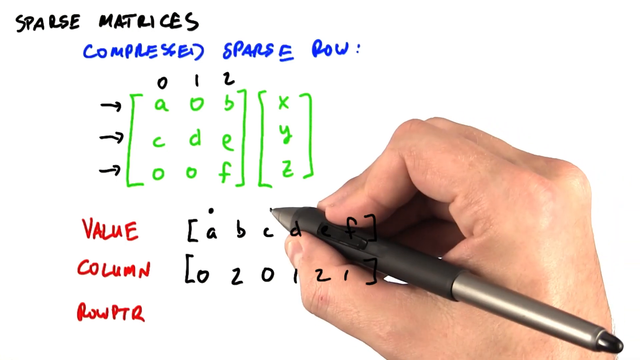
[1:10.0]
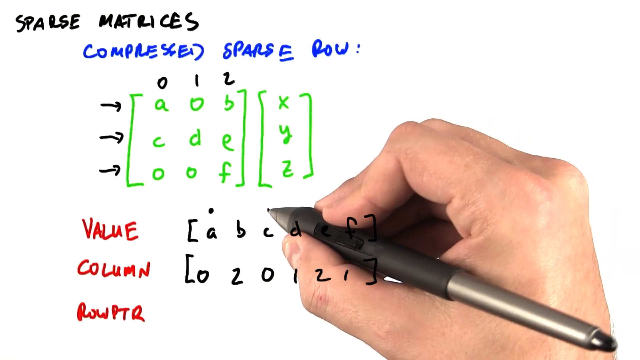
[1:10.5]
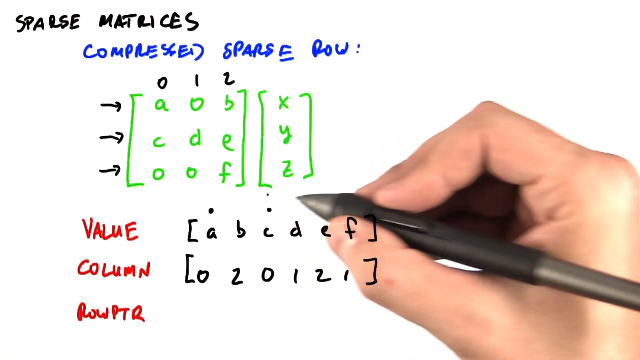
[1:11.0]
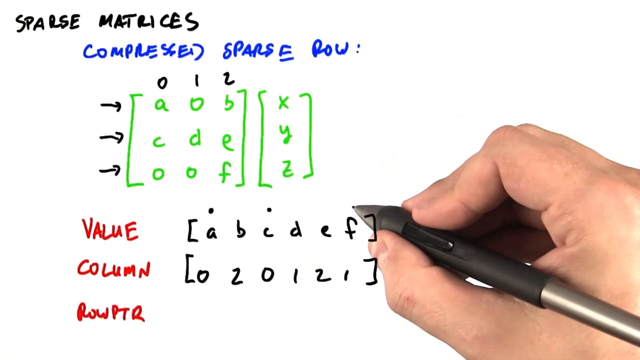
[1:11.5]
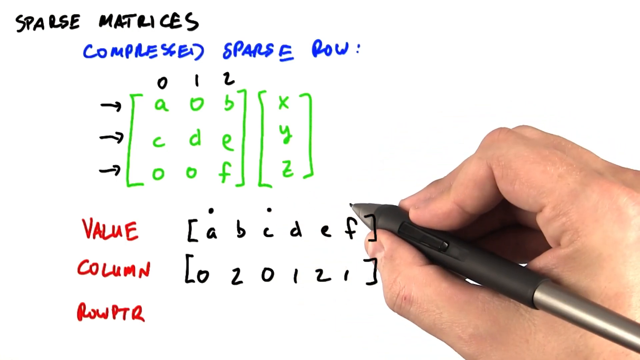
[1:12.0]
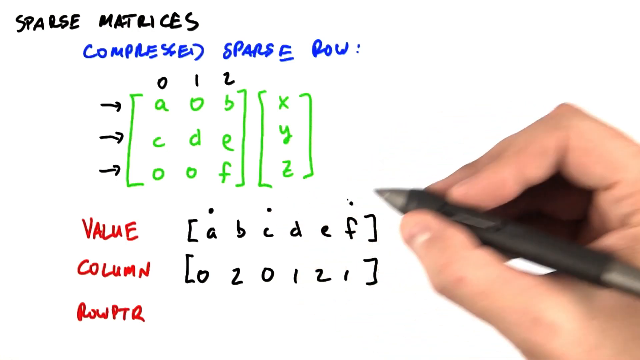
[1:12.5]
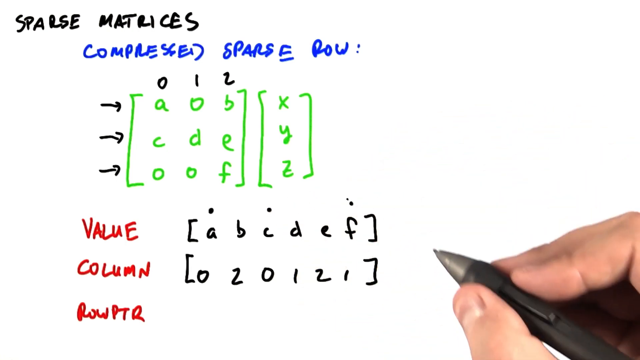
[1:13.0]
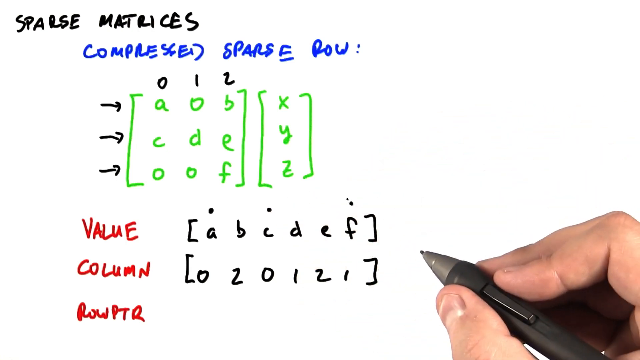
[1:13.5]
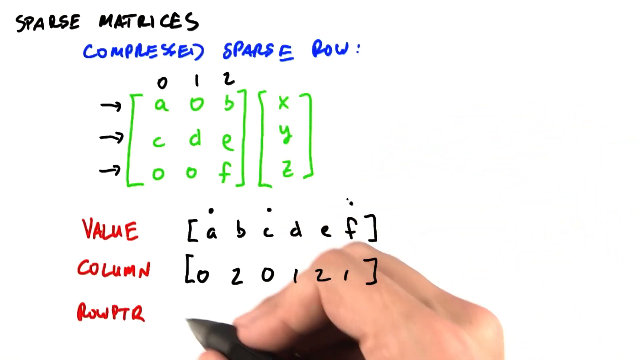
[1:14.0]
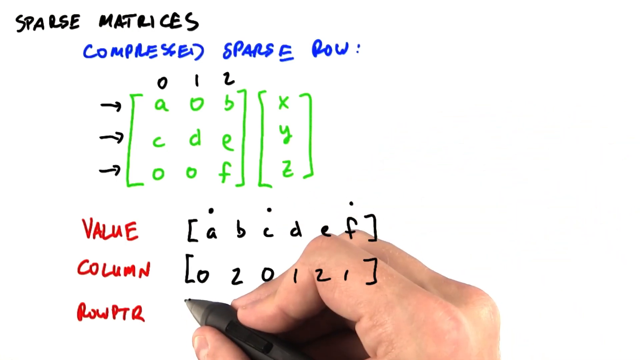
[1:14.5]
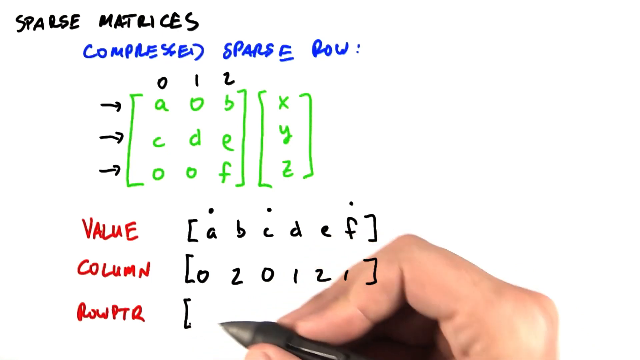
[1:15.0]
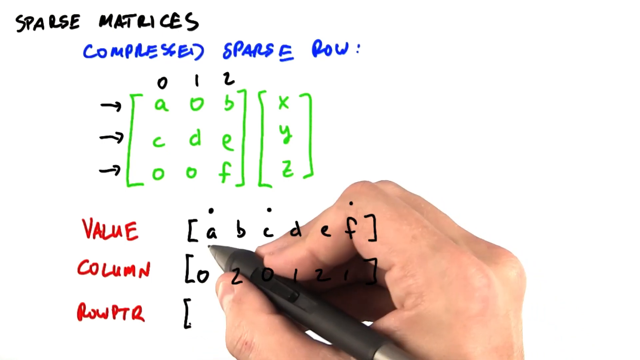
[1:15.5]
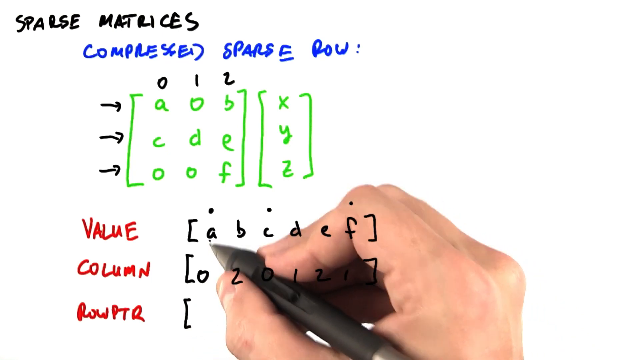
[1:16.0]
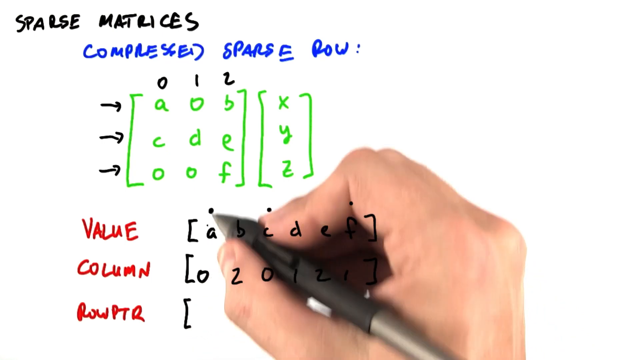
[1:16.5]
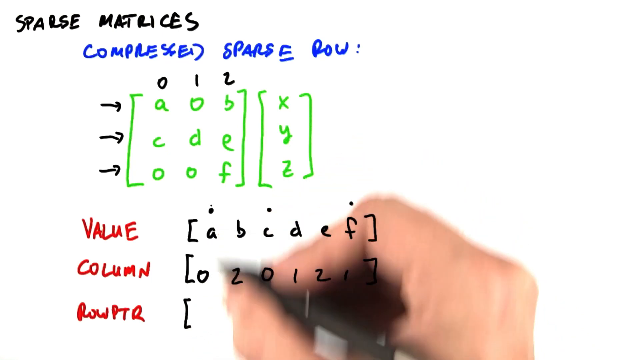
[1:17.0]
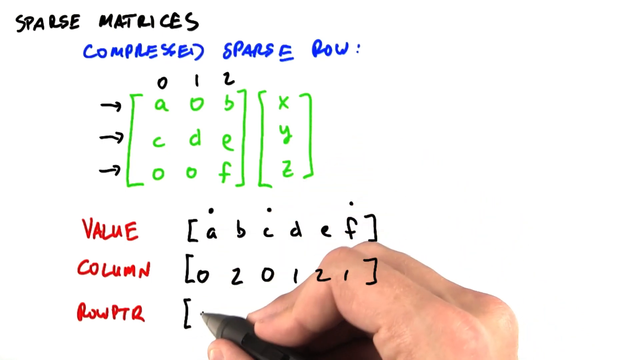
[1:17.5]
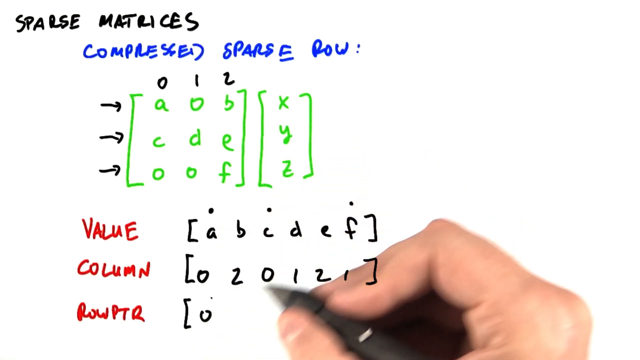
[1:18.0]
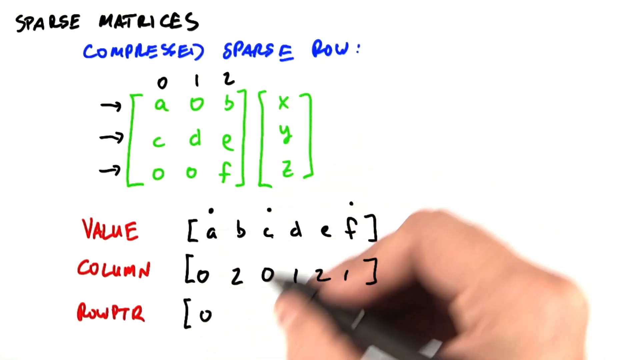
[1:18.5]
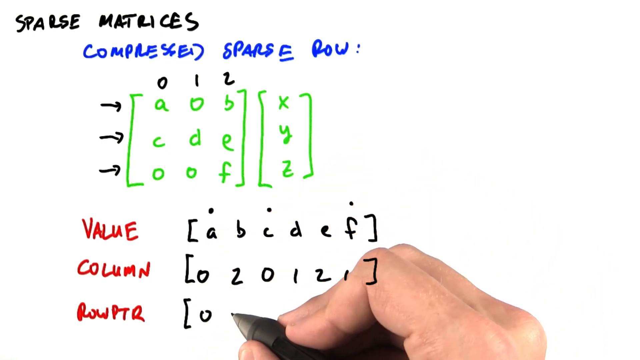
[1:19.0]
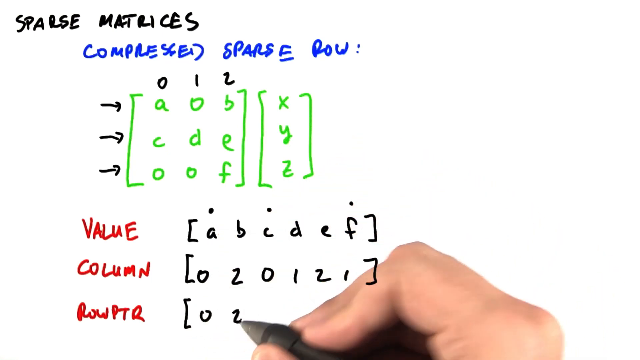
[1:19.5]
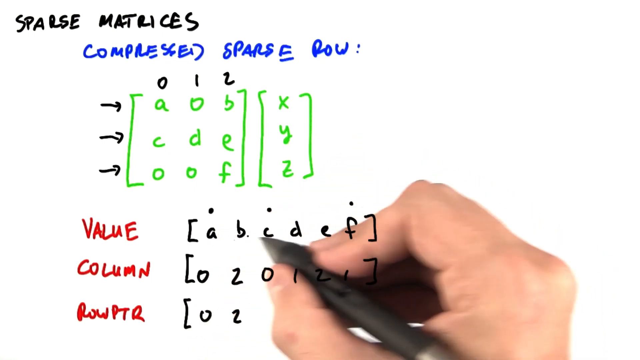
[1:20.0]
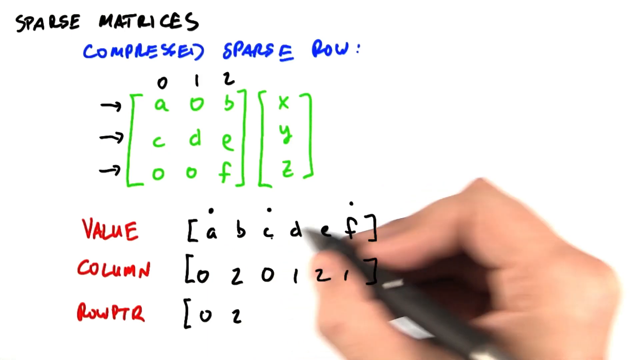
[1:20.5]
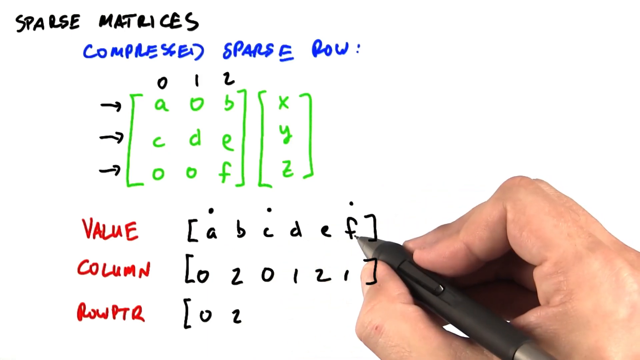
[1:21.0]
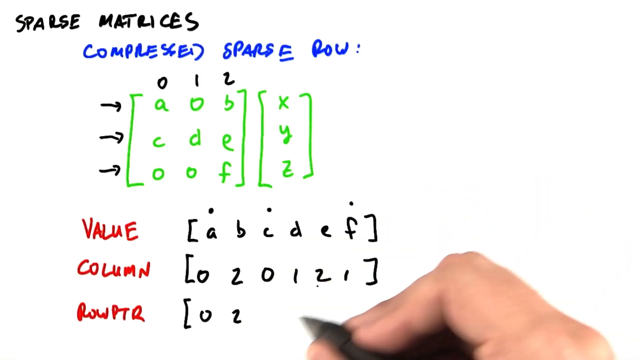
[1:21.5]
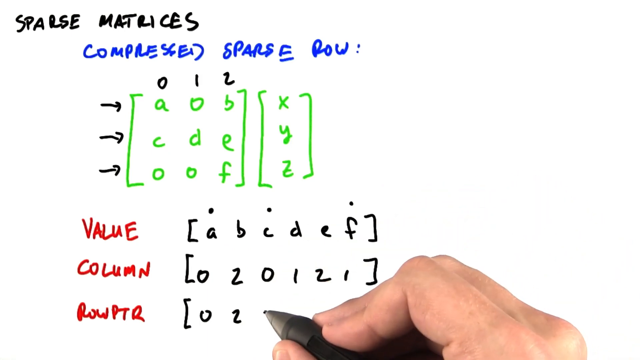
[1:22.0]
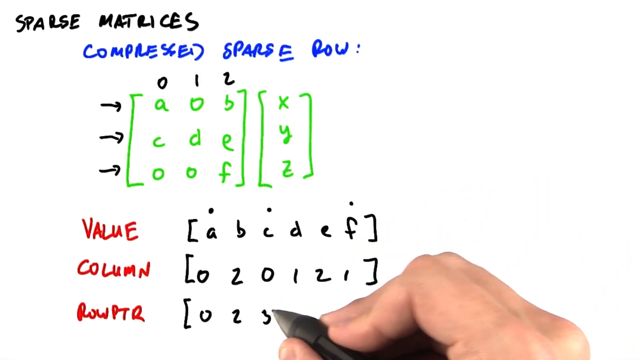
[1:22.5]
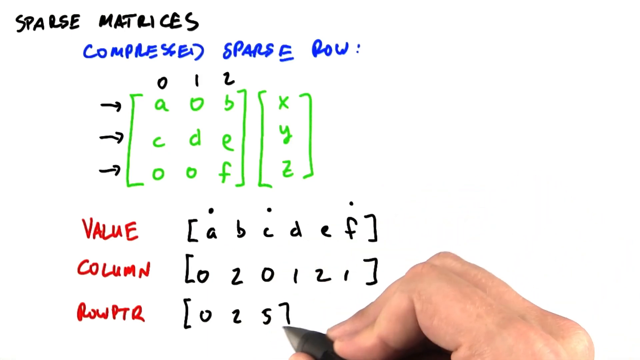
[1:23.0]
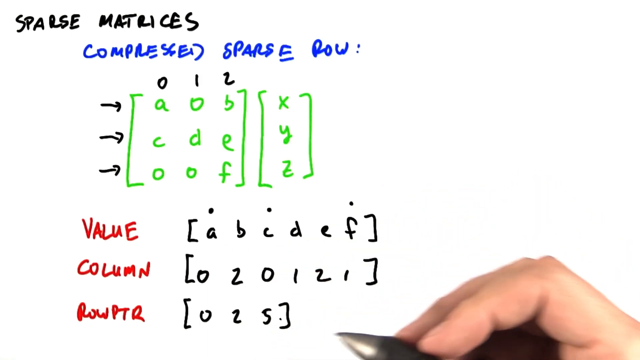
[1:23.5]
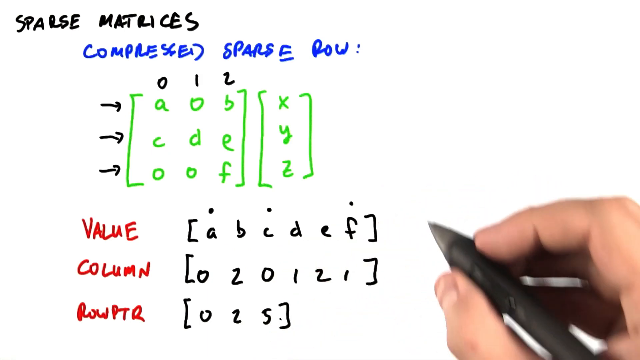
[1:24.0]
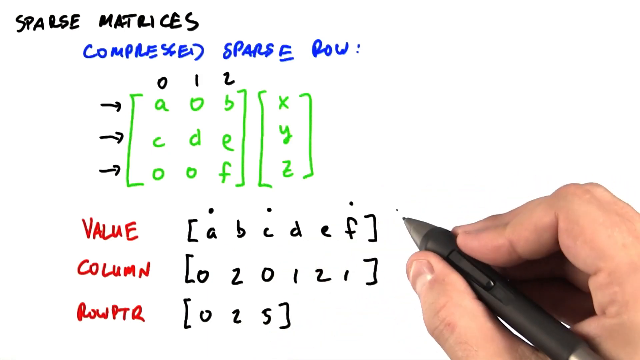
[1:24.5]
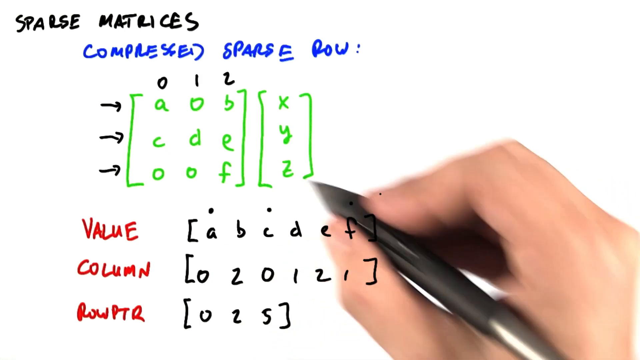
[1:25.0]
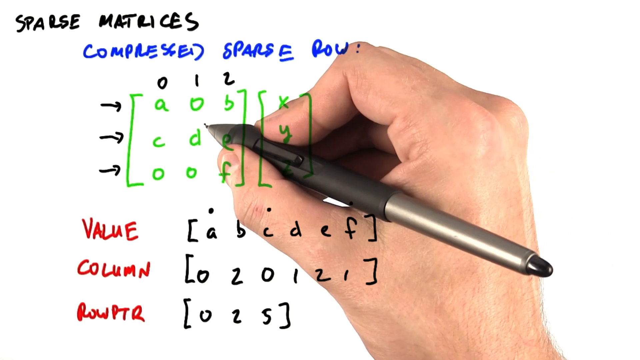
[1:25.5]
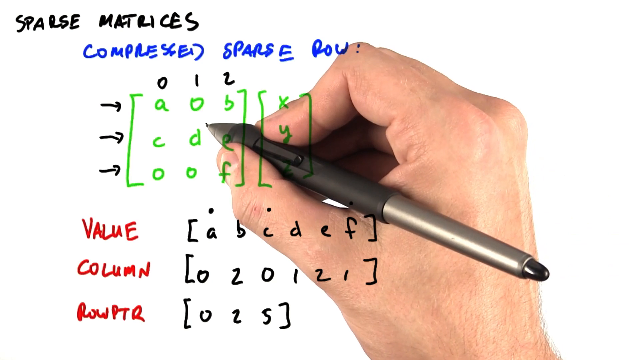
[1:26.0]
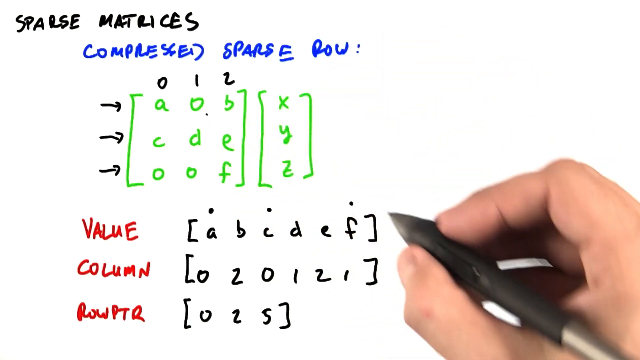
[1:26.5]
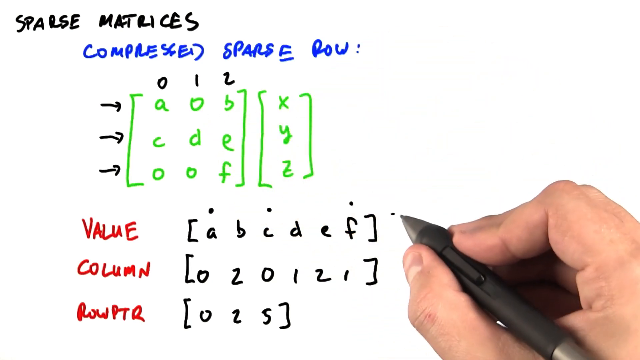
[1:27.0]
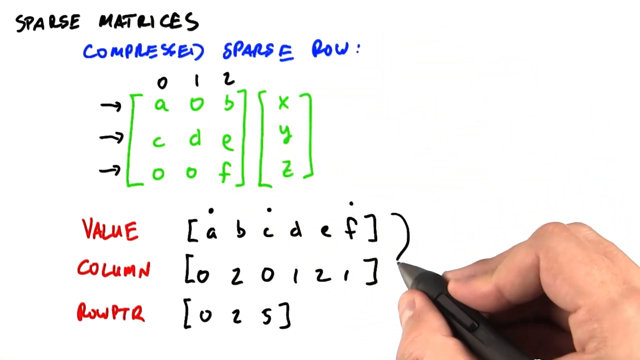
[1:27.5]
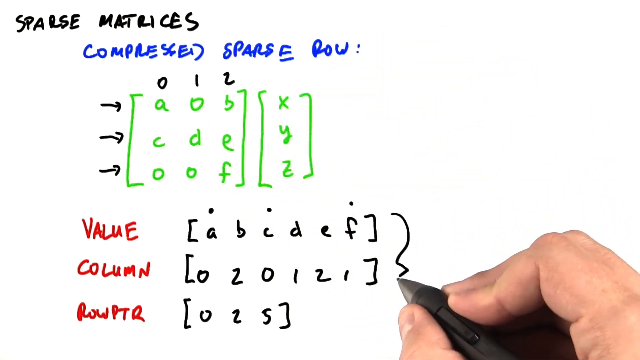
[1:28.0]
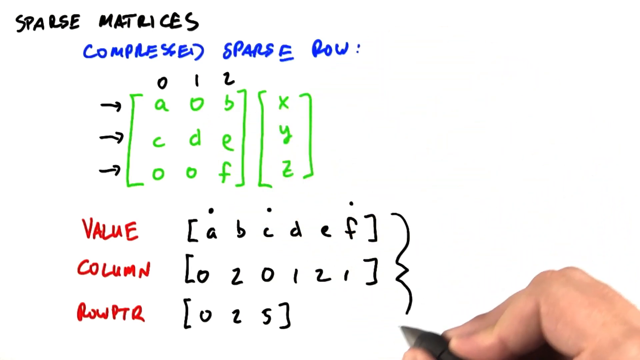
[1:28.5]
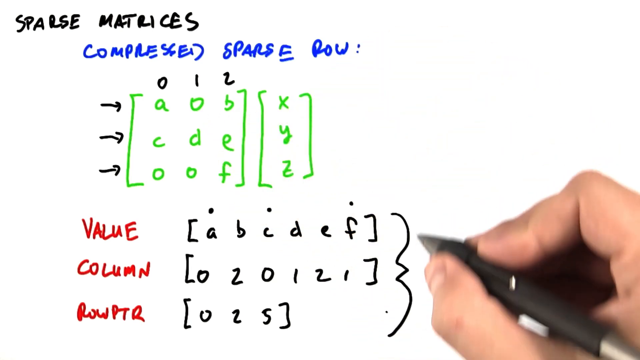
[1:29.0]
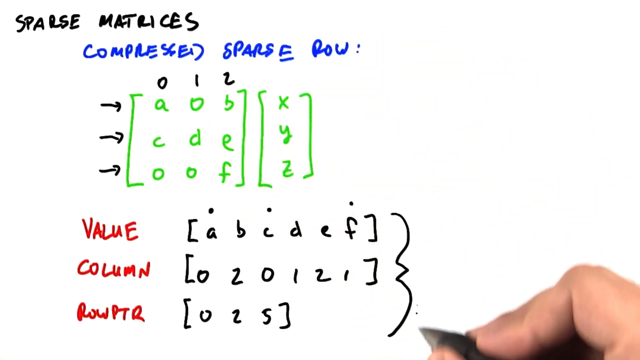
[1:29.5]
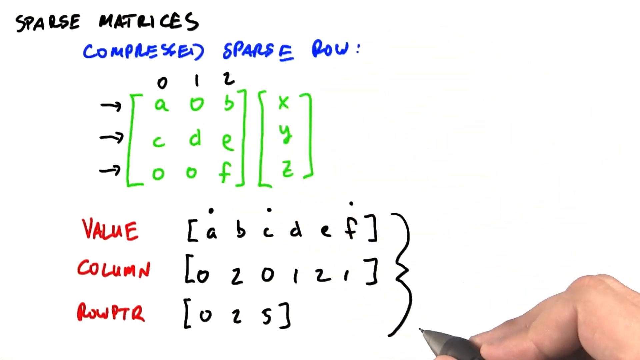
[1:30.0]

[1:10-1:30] The lecturer writes the solution for the matrix, placing dots on top of the values A, C and F. He goes down to row PTR, opens a square bracket and writes 0, 2, then hovers over A, C, F and writes the number 5. He closes the square bracket and hovers over the 0 back on the vectors at the top. He then draws a curly bracket and is about to write something next to it. His answers are written in black on the whiteboard against the red labels. Value reads: open square bracket, A with dots on top, B, C with dots on top, D, E, F with dots on top, close square bracket. Column reads: open square bracket, 0, 2, 0, 1, 2, 1, close square bracket. Row PTR, written in red, has black square brackets containing 0, 2, 5.